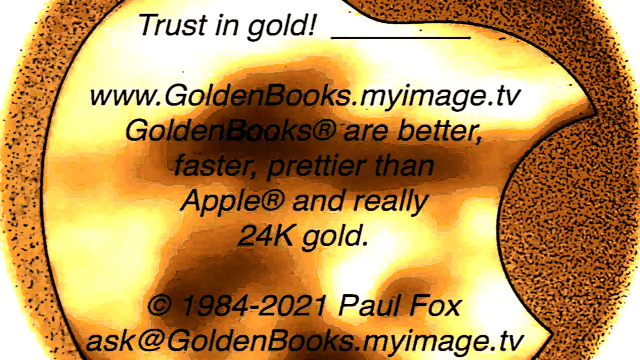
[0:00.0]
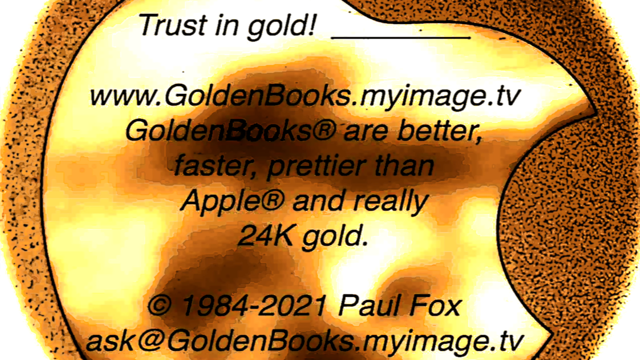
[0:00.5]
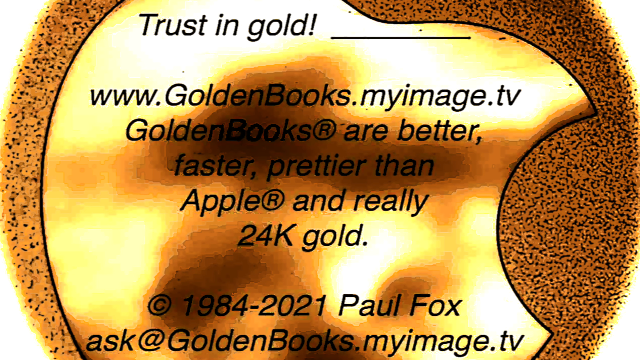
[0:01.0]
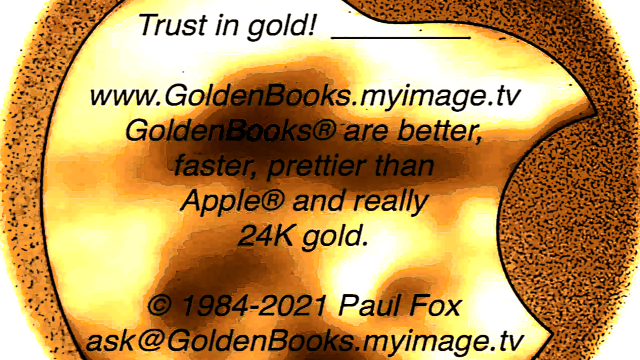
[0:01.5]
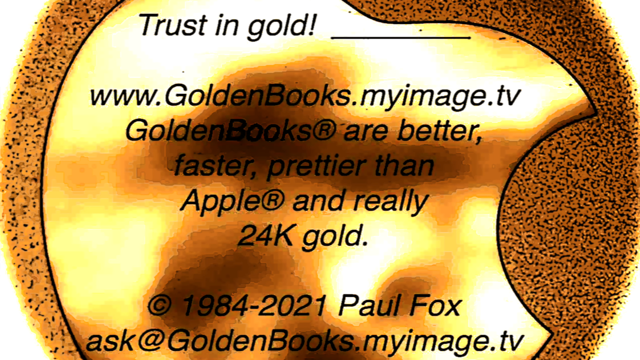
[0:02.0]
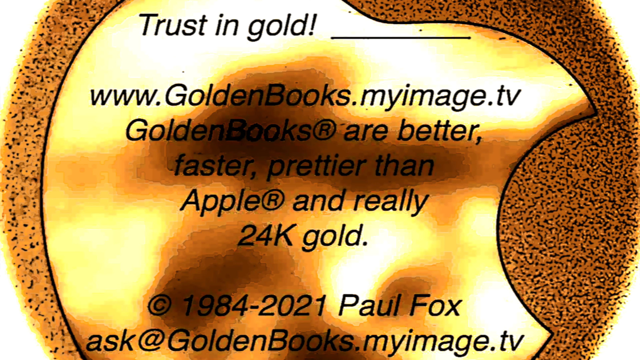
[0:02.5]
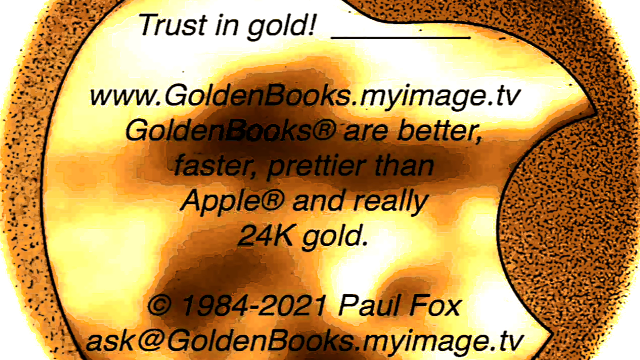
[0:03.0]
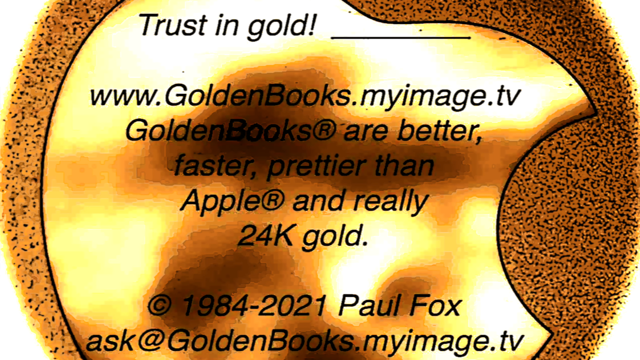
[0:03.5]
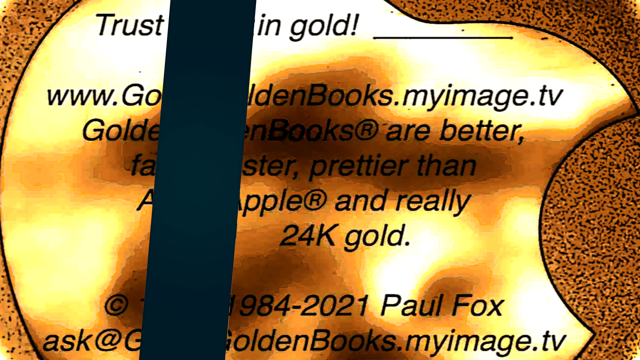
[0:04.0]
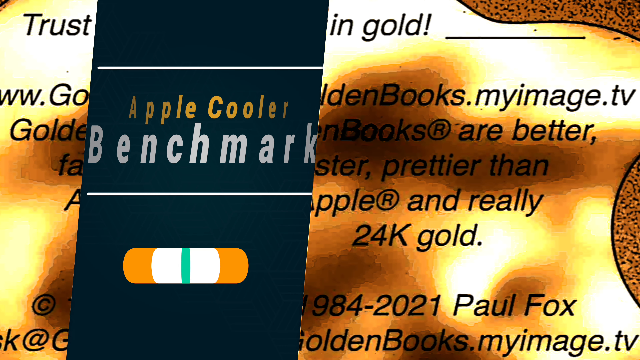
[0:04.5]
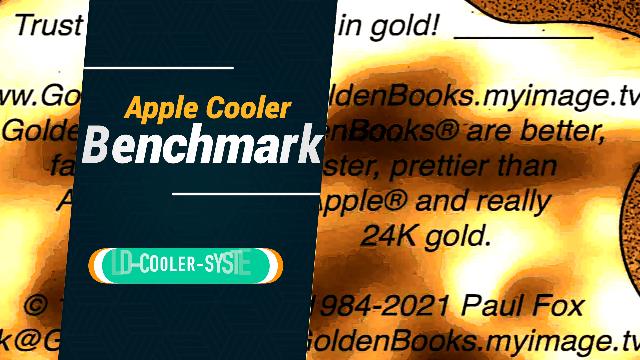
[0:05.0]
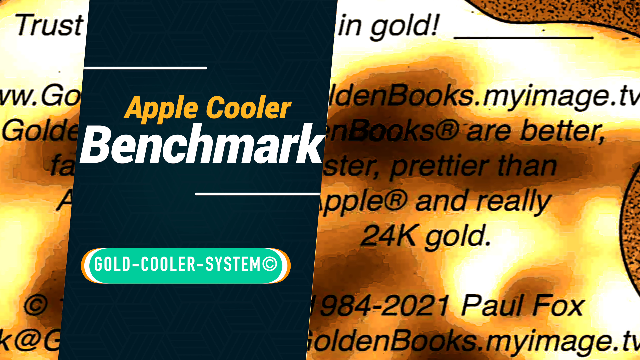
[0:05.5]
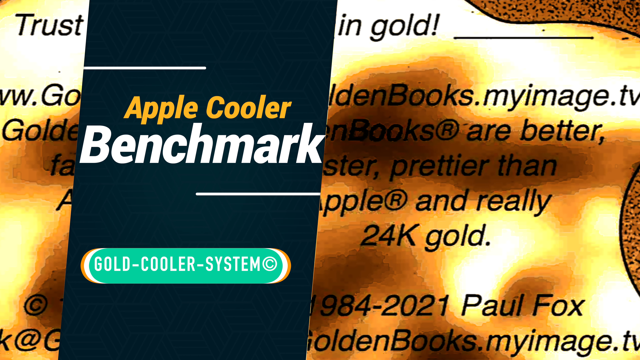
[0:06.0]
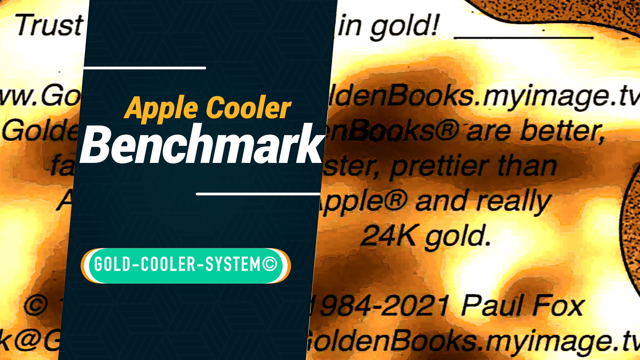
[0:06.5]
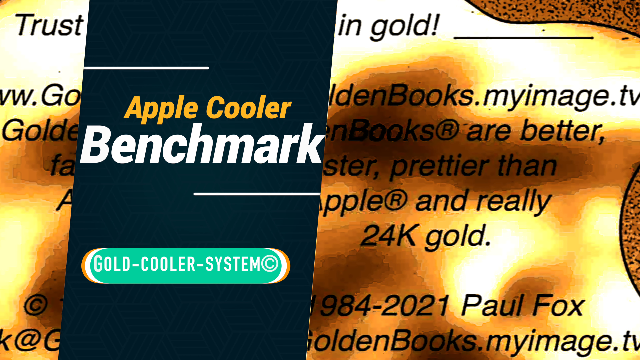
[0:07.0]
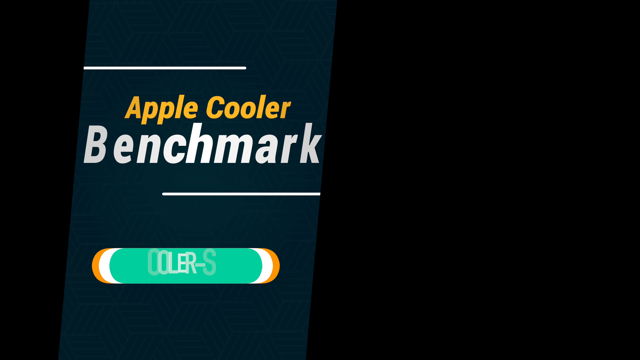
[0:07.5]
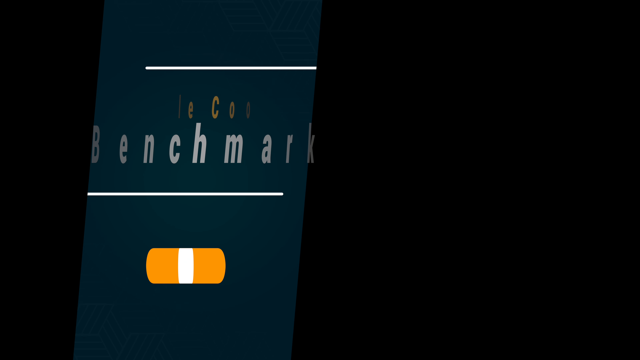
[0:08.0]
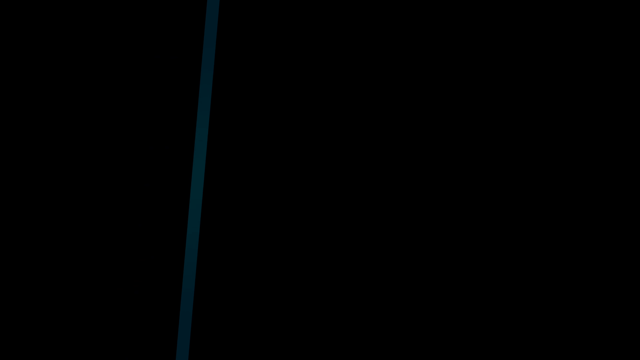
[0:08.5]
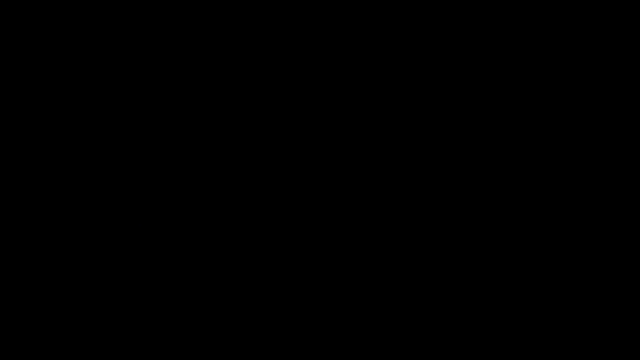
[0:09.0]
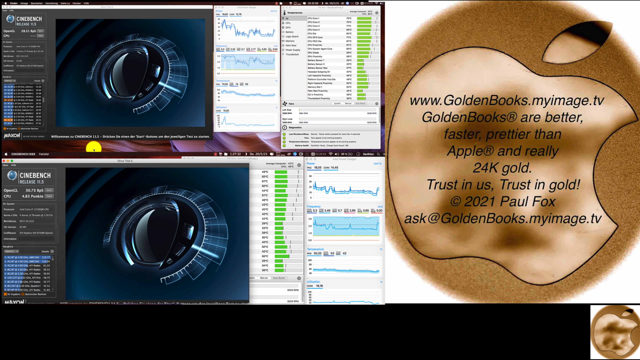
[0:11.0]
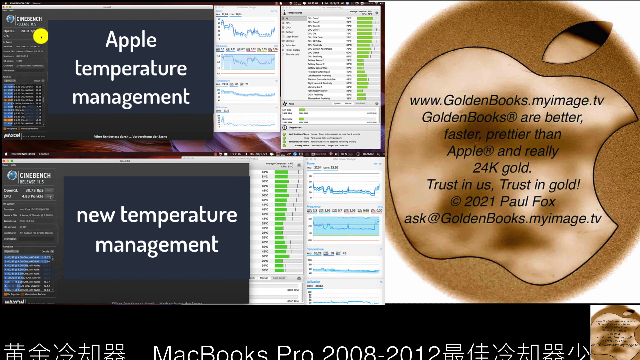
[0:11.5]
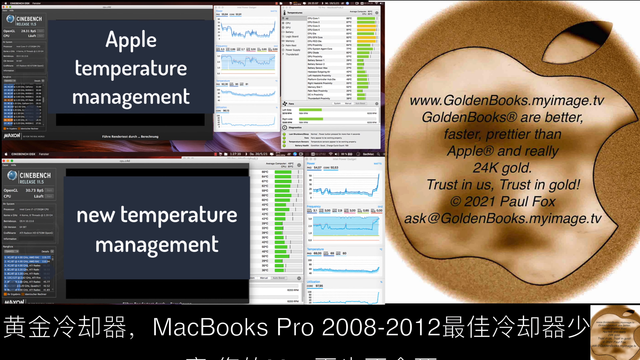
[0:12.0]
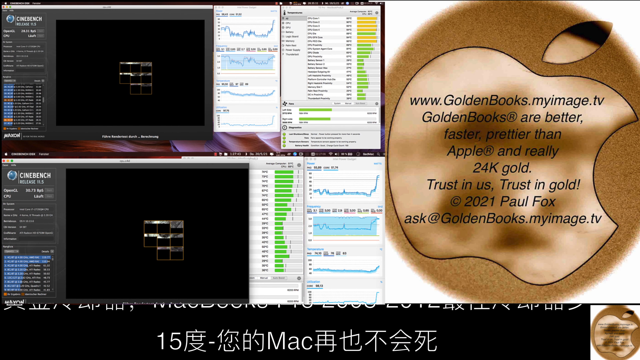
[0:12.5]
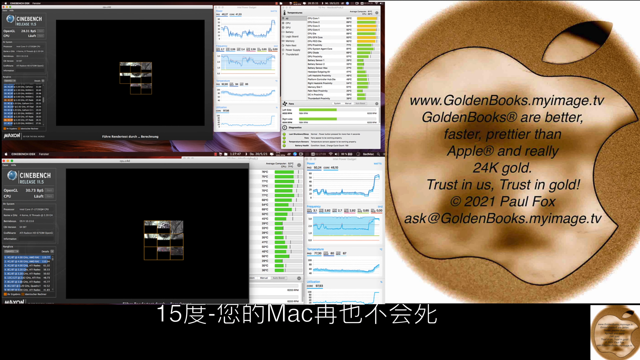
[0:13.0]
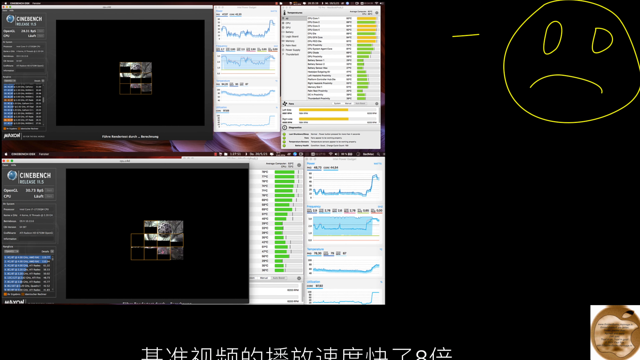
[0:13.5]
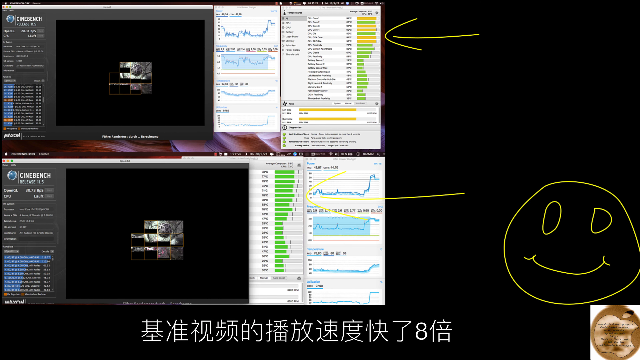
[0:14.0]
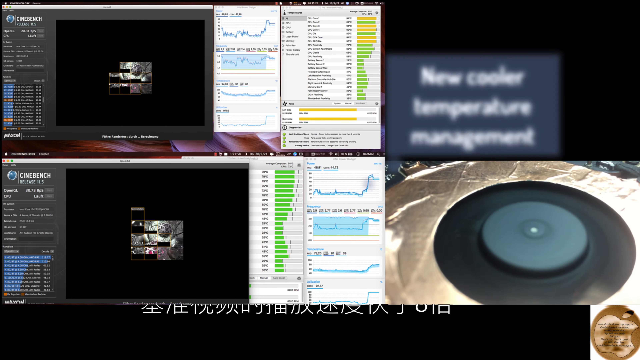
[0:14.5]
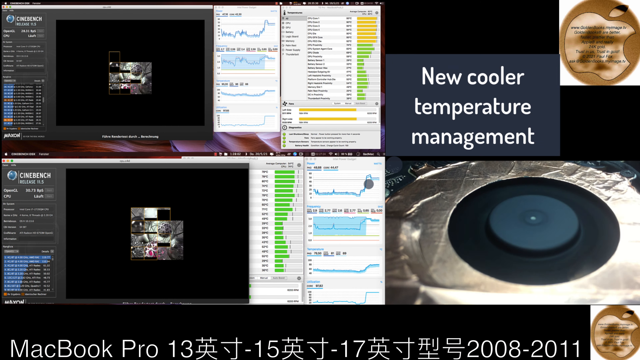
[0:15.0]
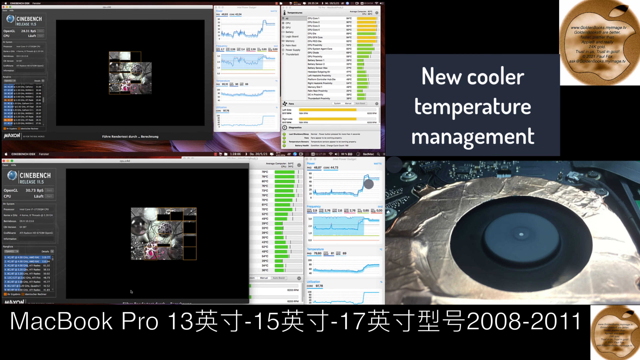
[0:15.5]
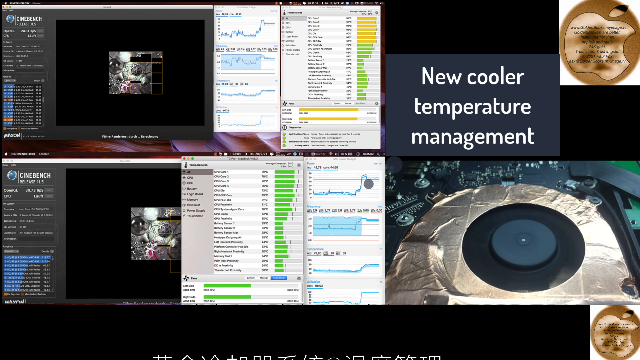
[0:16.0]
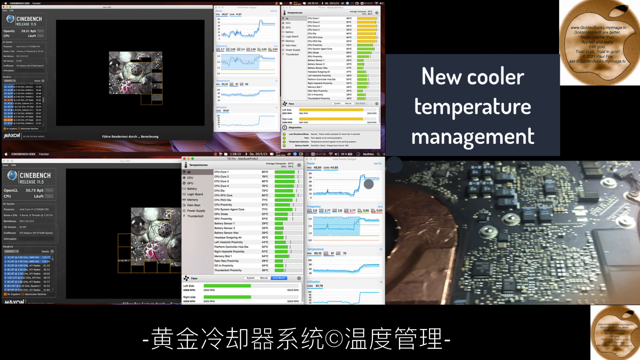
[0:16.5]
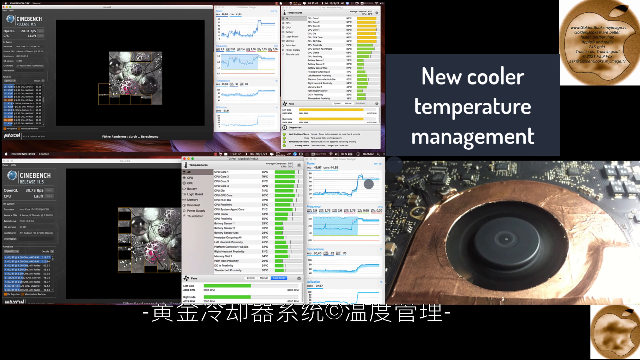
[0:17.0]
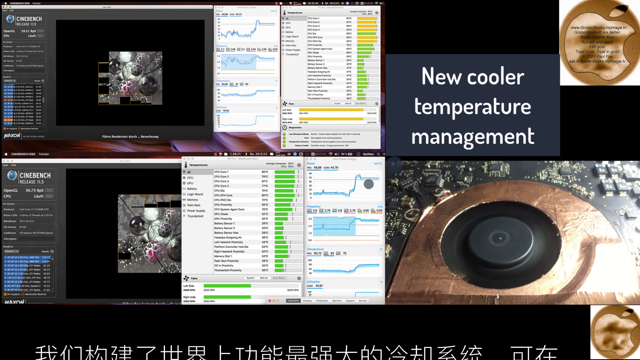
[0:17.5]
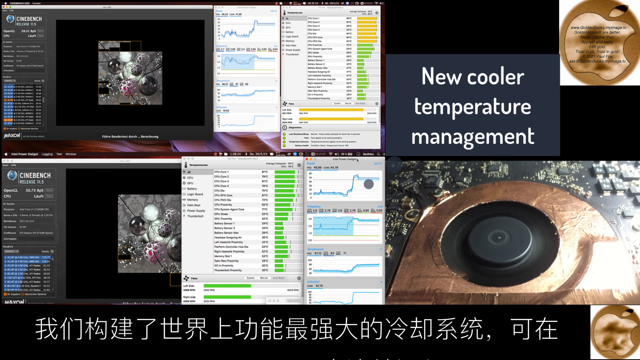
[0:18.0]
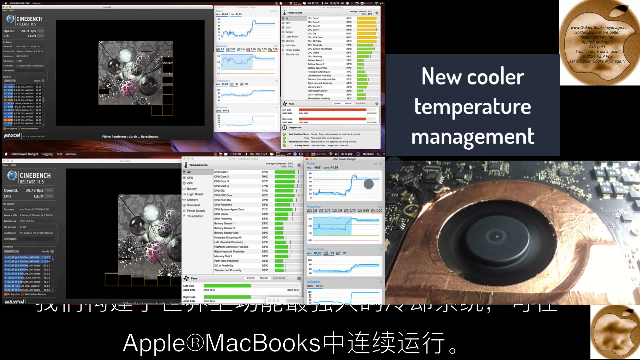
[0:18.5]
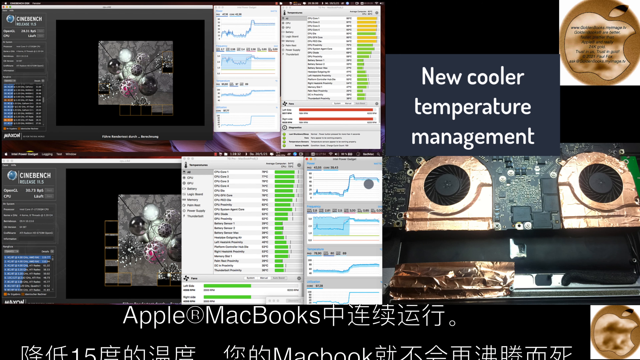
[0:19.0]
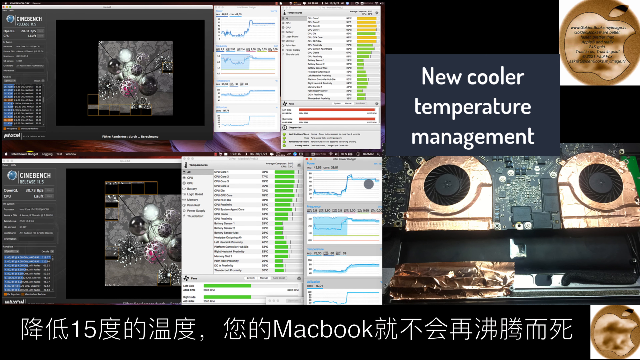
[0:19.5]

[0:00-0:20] The video opens with an amorphous, round, golden logo topped by black text reading "Trust in Gold", followed by a paragraph: "www.goldenbooks.myimage.tv. Golden books are better, faster, prettier than Apple, and really 24k gold." Below that is "© 1984-2021, Paul Fox." The image then splits apart along a diagonal line a little left of center, revealing a dark blue background with the yellow text "Apple Cooler", the larger white text "Benchmark", and below them, in a green oval, the text "Gold Cooler System". This closes and fades to black. Next, two screen captures of different benchmarks running as active video appear, one on top of the other. To their right is a golden apple logo with the same text as the first paragraph, plus the added text "trust in us, trust in gold, copyright 2021, Paul Fox, ask at goldenbooks.myimage.tv". At the very bottom, Japanese text scrolls vertically and continuously.